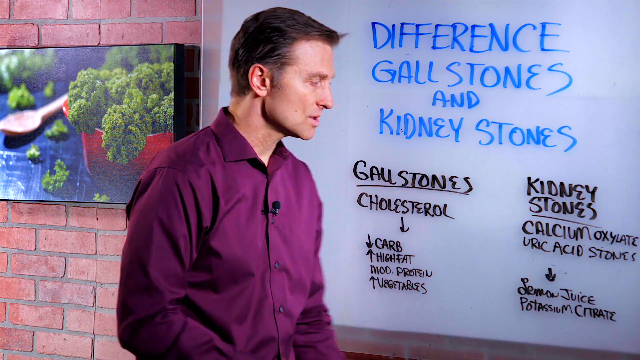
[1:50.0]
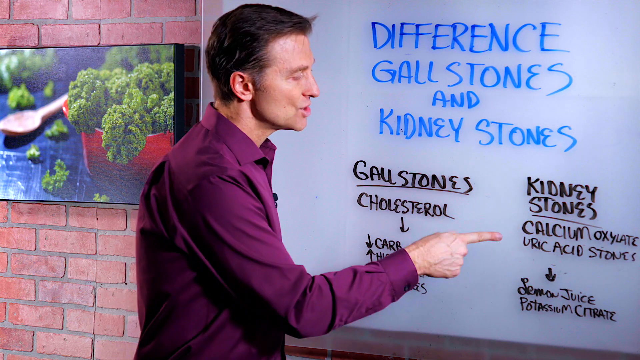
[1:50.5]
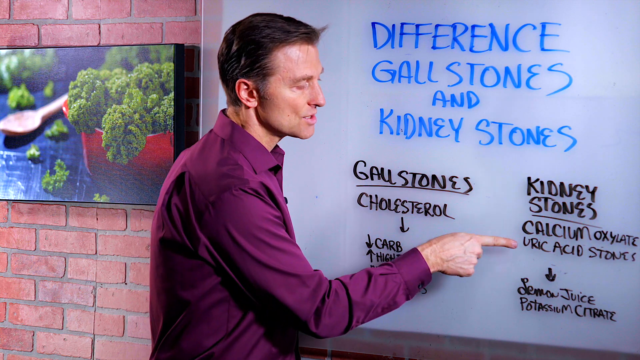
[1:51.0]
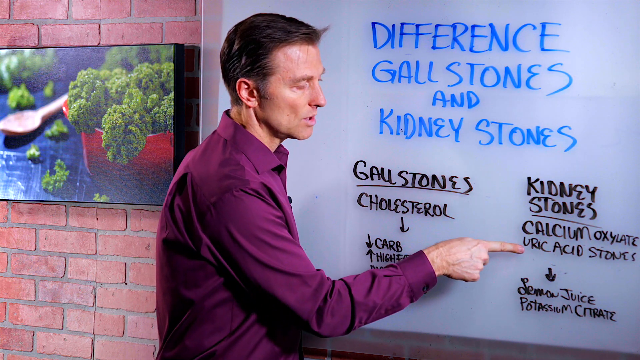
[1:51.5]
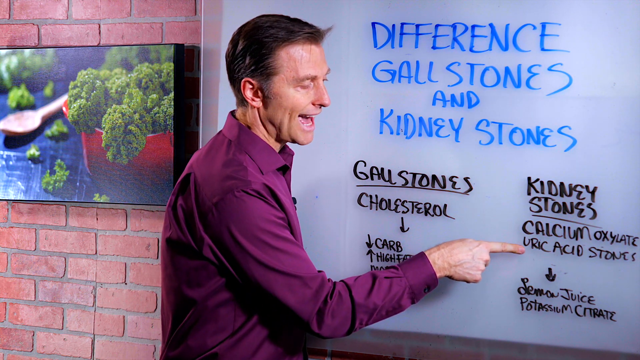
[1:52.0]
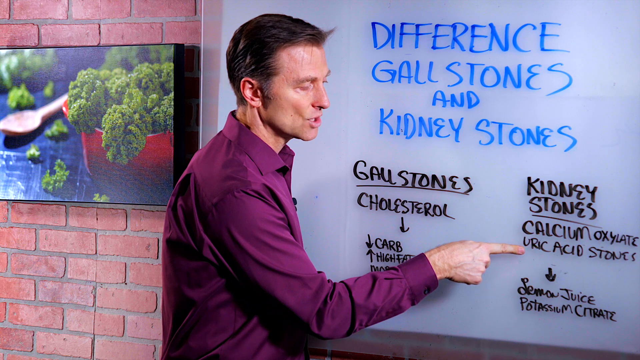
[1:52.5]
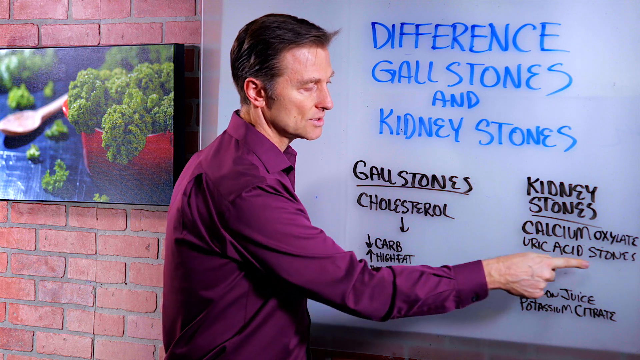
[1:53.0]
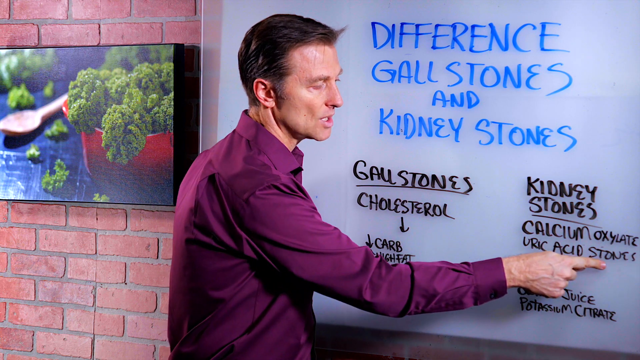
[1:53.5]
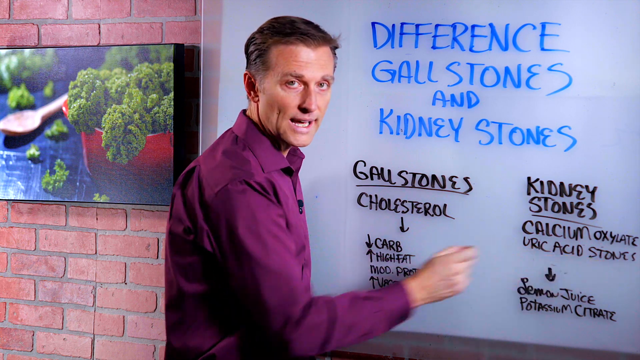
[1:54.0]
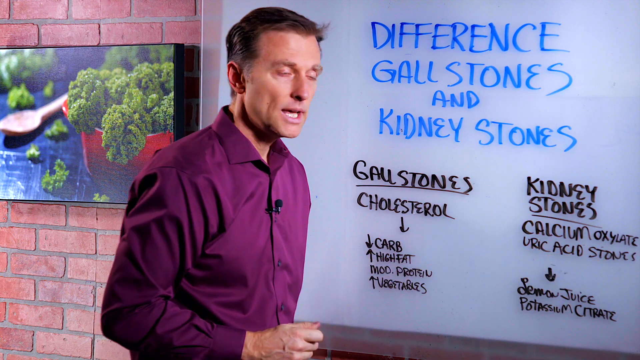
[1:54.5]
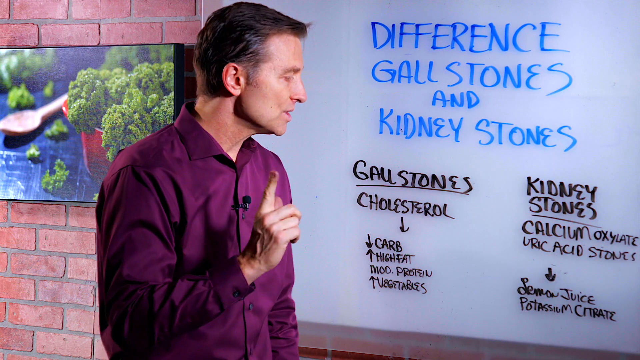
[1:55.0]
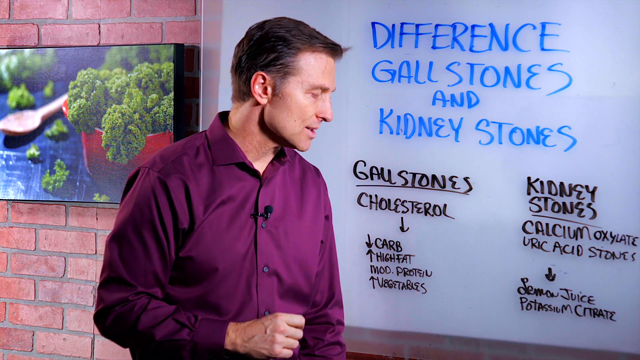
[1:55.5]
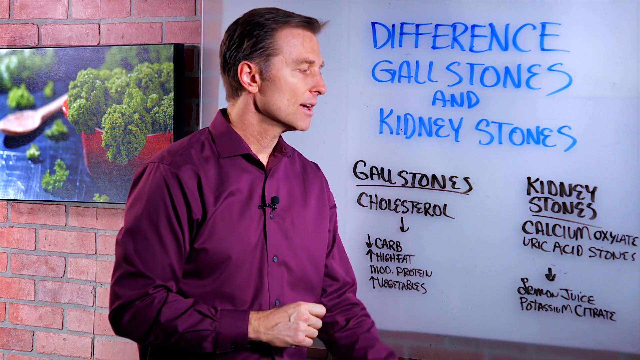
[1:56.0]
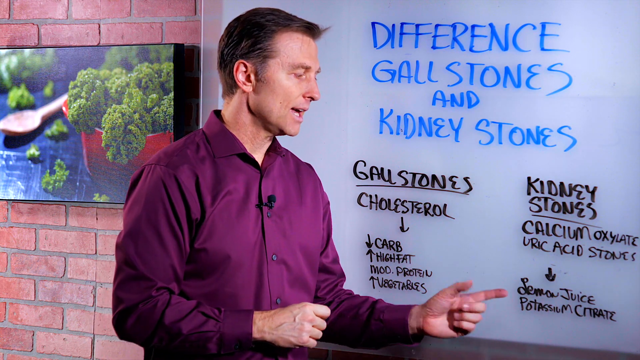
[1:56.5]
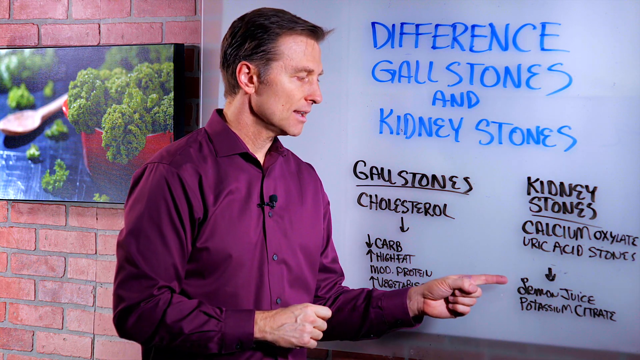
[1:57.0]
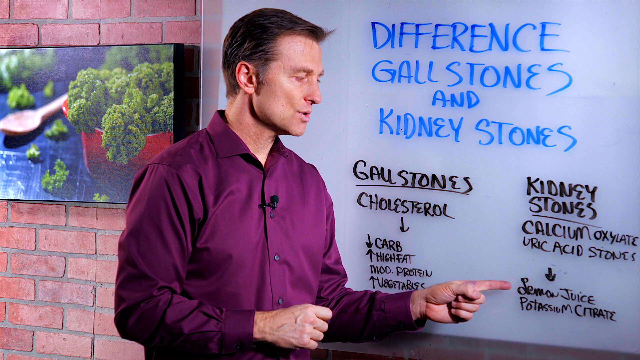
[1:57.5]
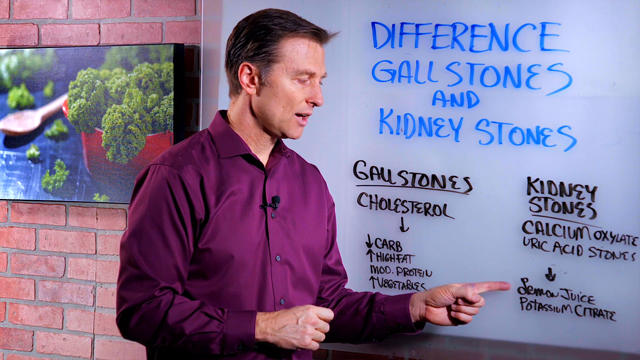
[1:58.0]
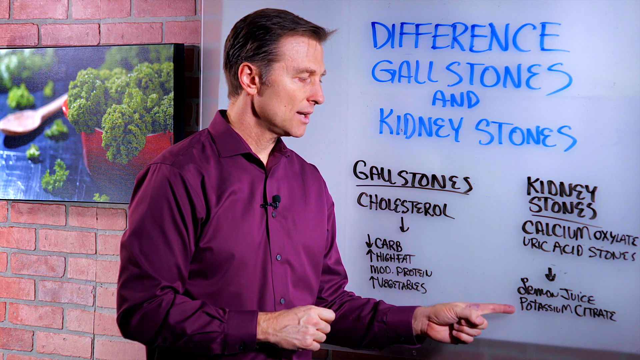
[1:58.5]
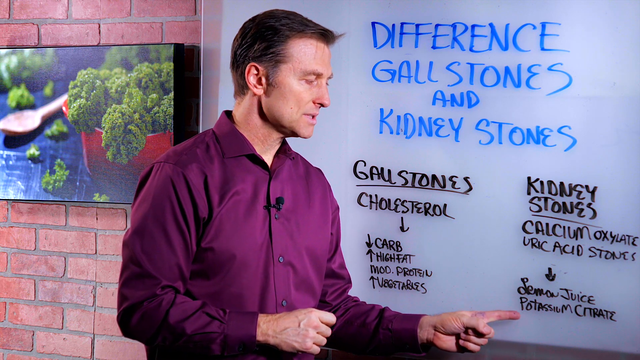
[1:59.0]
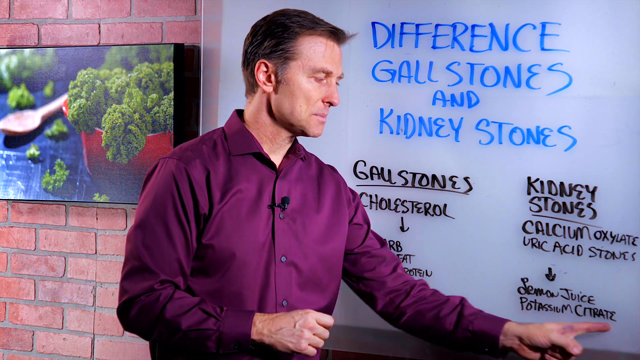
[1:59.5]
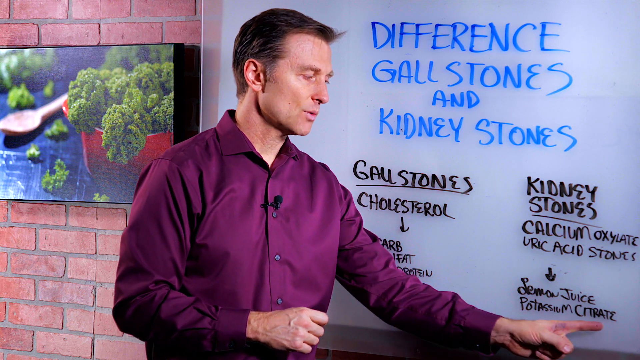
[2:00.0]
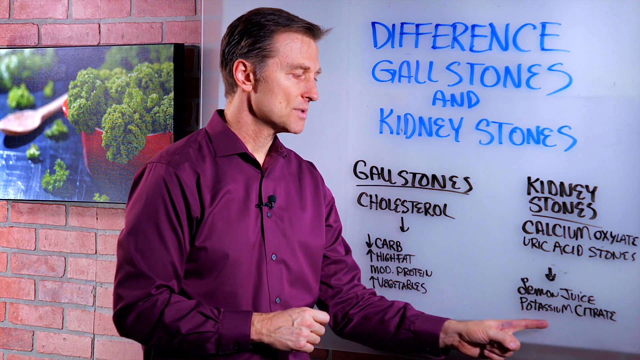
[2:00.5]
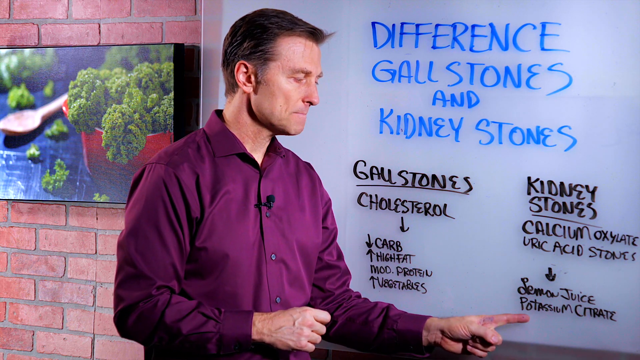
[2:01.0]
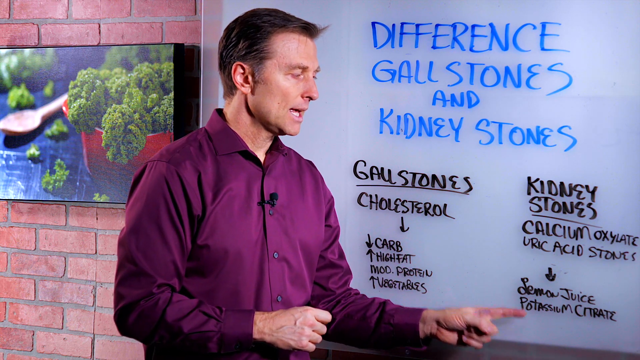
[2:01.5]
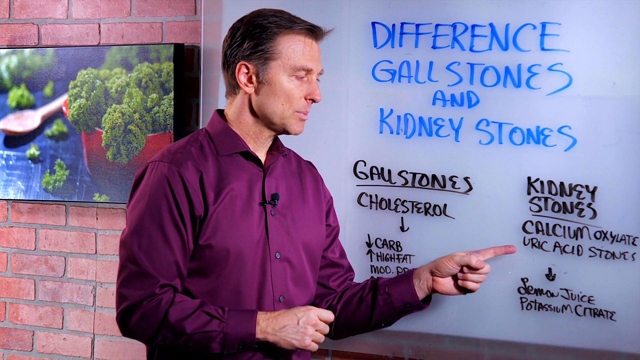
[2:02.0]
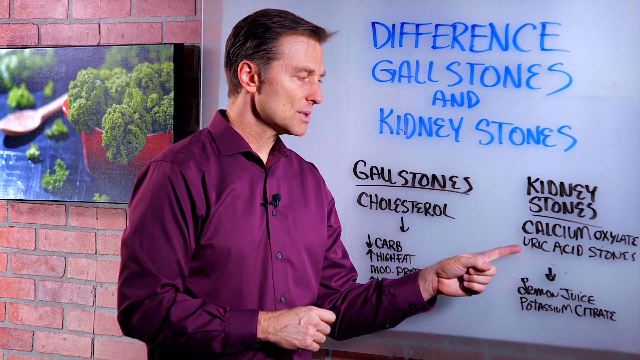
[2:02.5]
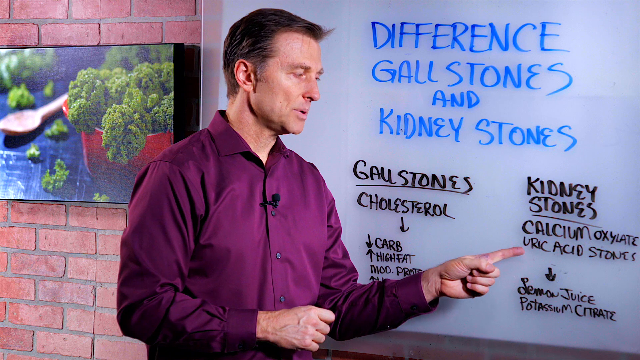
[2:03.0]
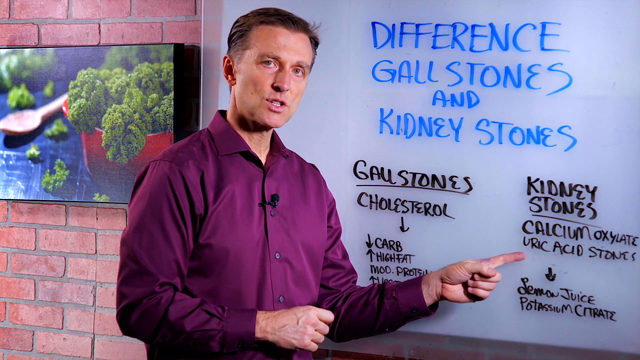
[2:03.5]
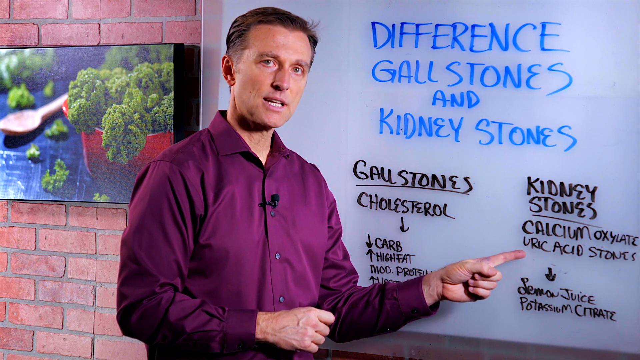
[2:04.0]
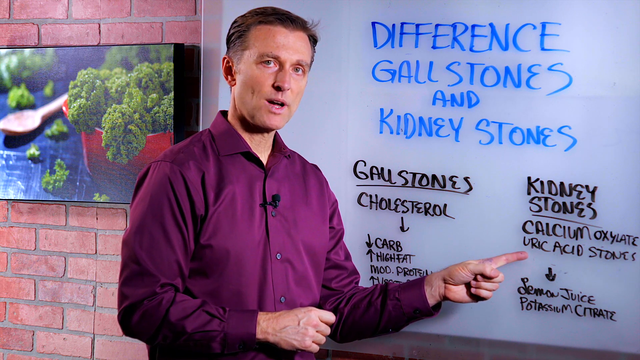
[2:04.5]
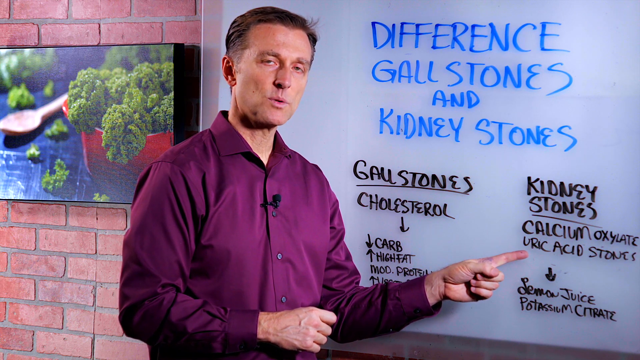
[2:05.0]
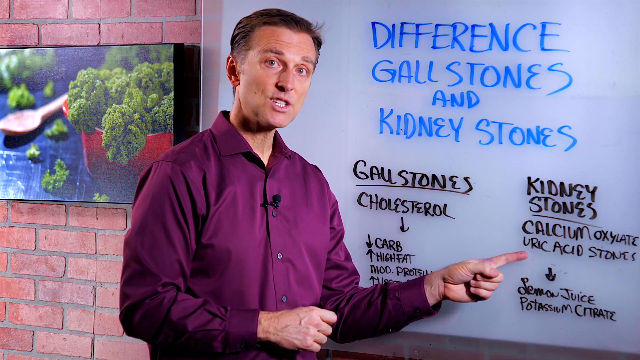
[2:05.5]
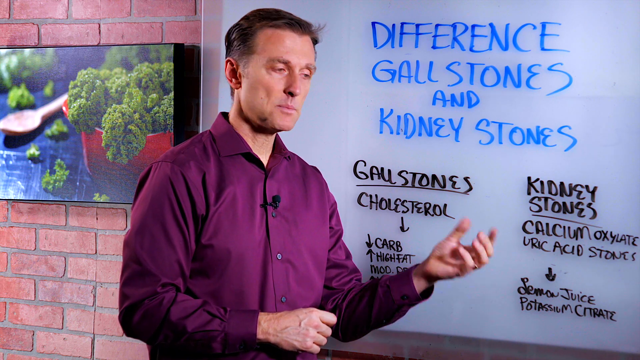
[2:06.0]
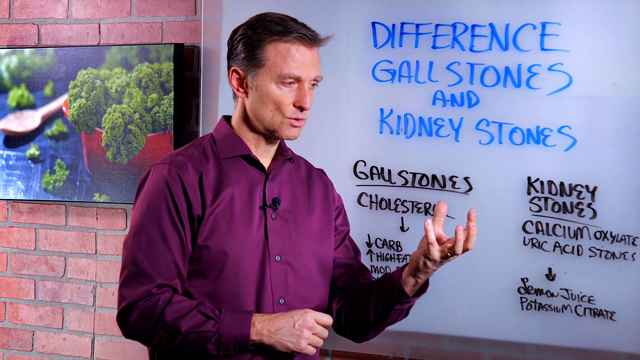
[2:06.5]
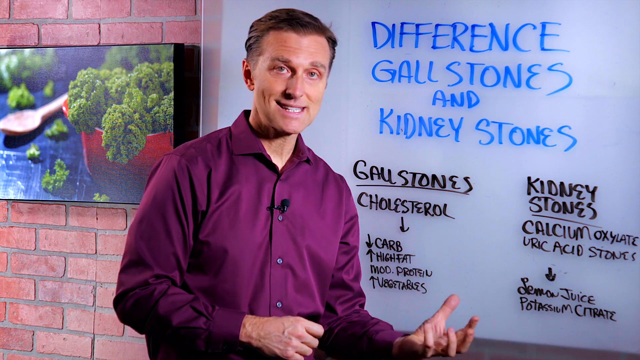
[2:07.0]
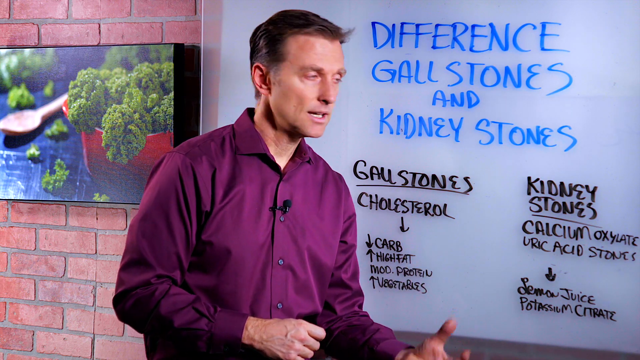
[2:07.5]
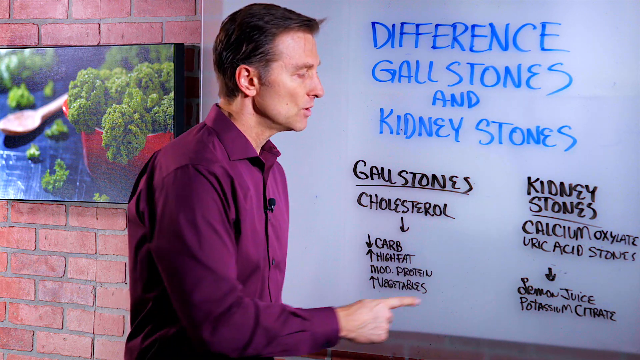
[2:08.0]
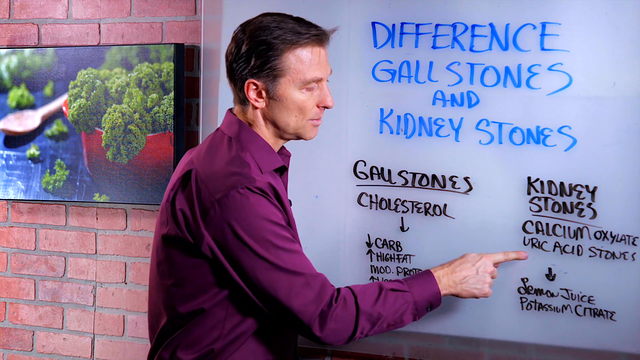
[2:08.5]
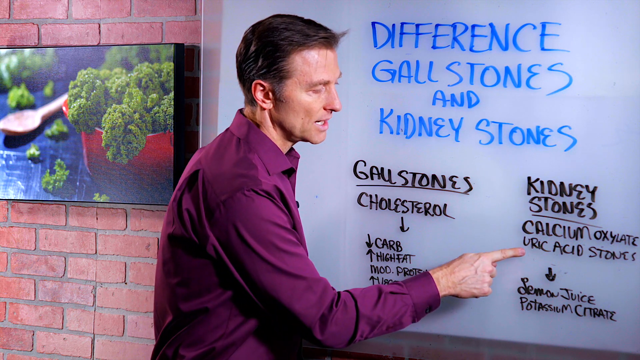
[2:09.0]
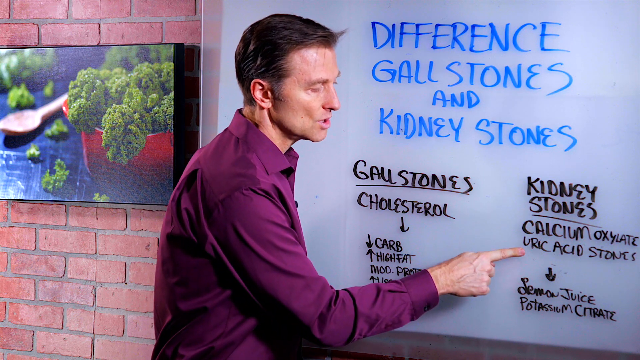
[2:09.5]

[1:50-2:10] The man continues speaking in front of the whiteboard. The title on the whiteboard, written in blue, reads "difference, gallstones, and kidney stones". Underneath in black is "gallstones" with a line under it, and listed below it are "cholesterol down, down carb, up high fat, mod protein, up vegetables". On the right, "kidney stones" has a line under it, and beneath that are "calcium oxalate", "uric acid stones", a down arrow, and under the arrow "lemon juice" and "potassium citrate". The man points with his right index finger at "uric acid stones" as he speaks, then points at "lemon juice", runs his left index finger under "potassium citrate", and points again to "uric acid stones". With his left hand he makes a cupped shape, fingertips and thumb pointing up, and gestures it downward.